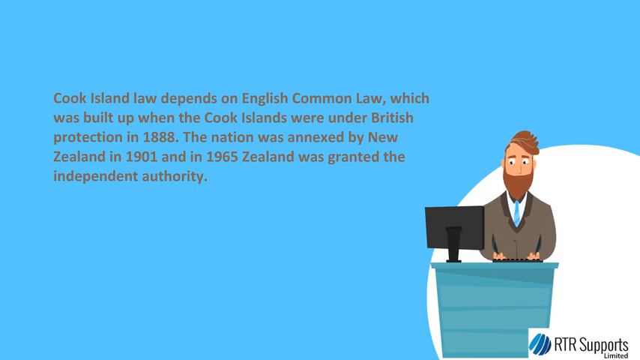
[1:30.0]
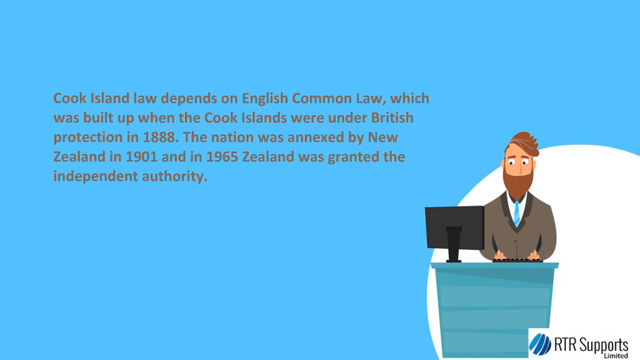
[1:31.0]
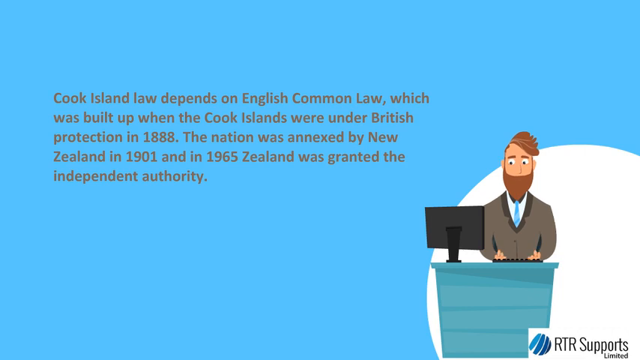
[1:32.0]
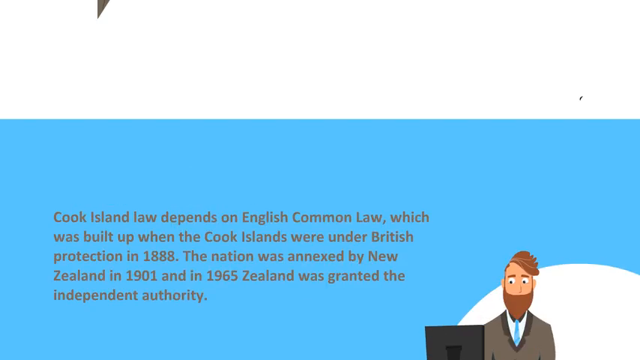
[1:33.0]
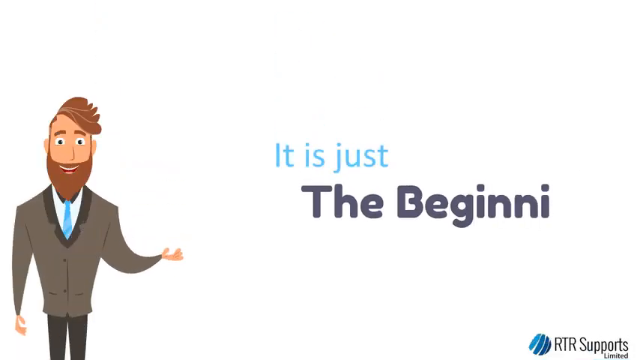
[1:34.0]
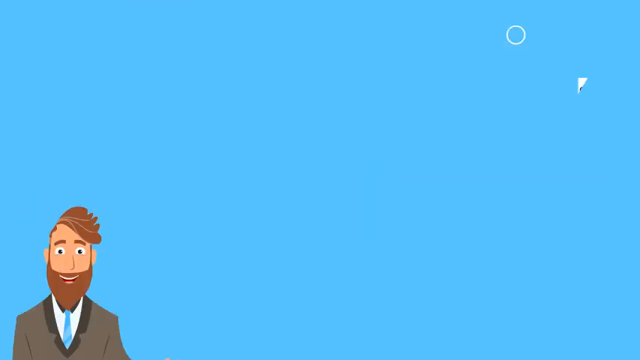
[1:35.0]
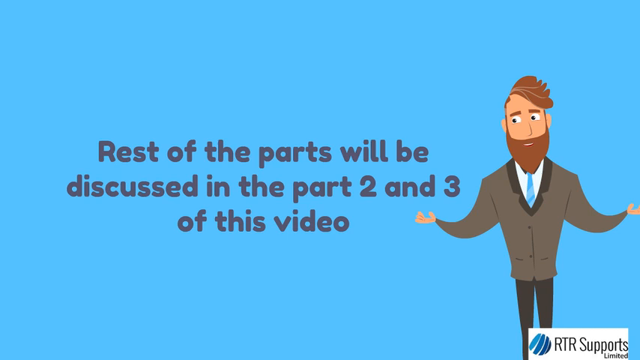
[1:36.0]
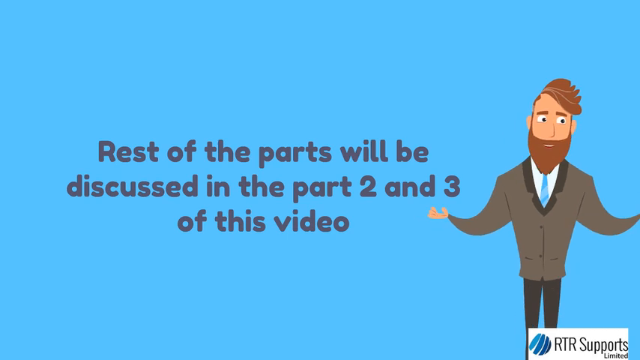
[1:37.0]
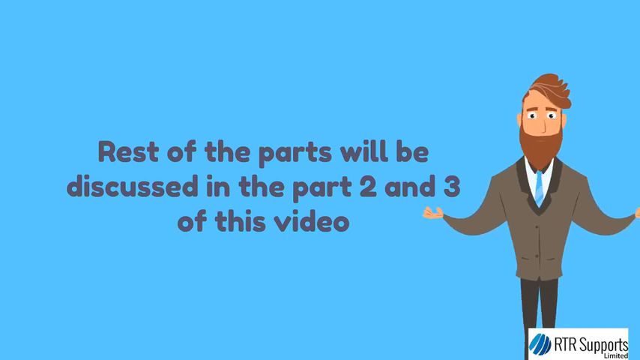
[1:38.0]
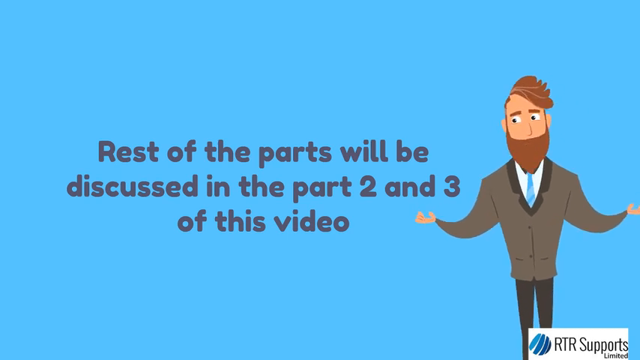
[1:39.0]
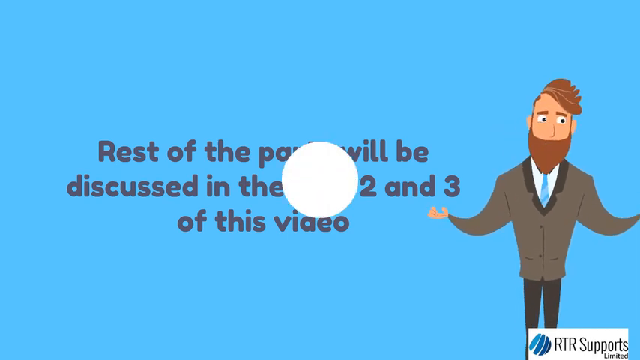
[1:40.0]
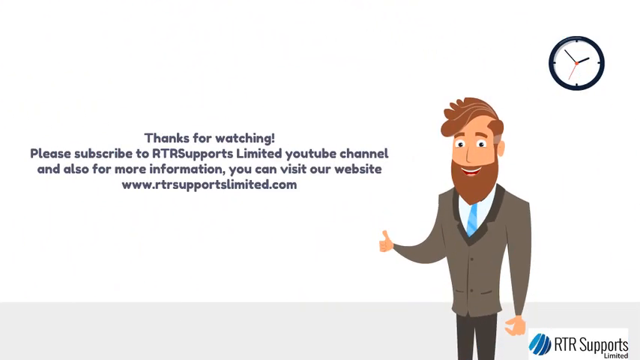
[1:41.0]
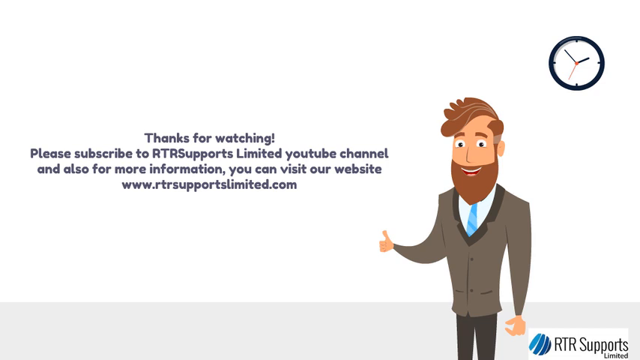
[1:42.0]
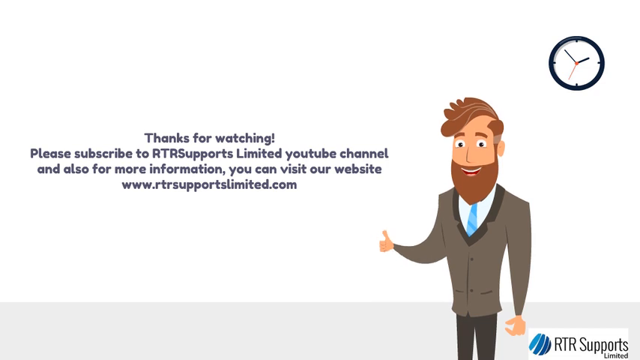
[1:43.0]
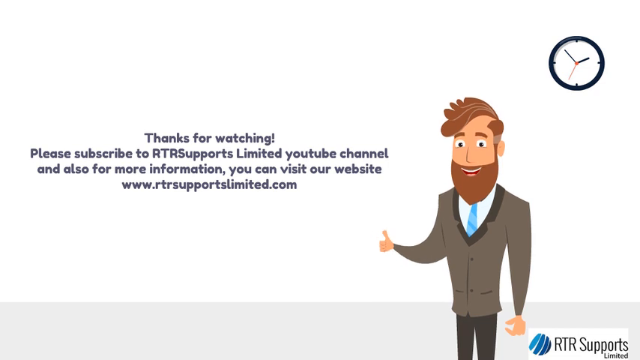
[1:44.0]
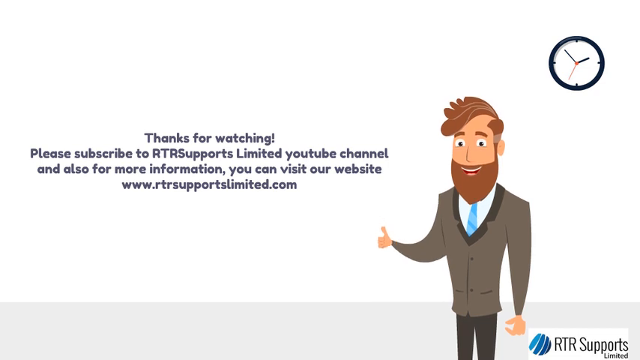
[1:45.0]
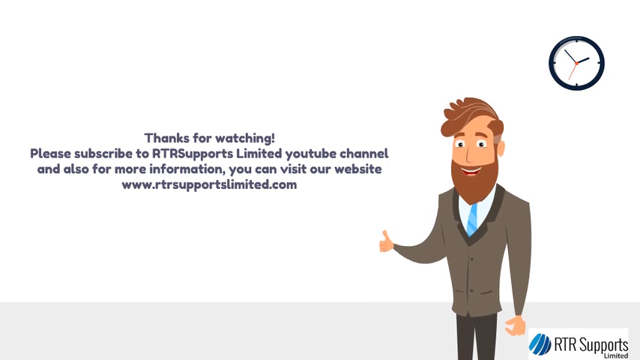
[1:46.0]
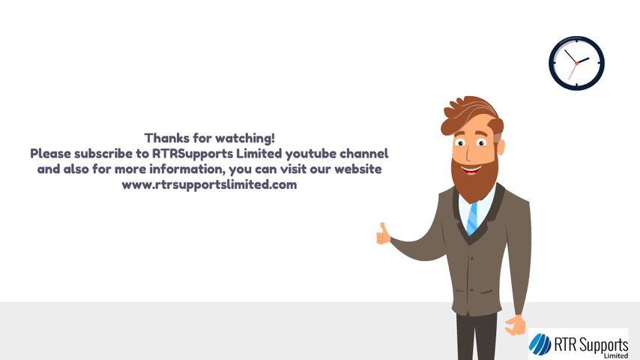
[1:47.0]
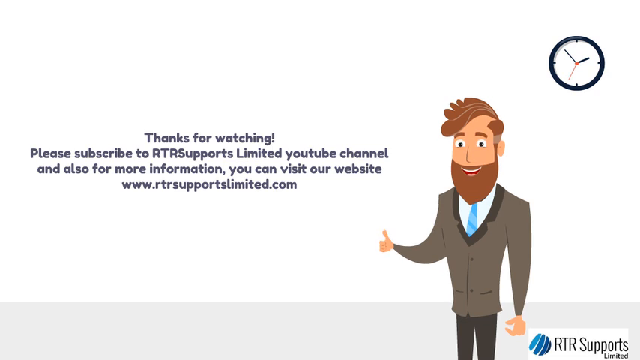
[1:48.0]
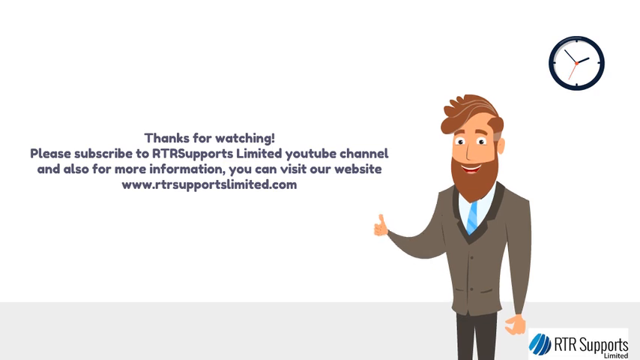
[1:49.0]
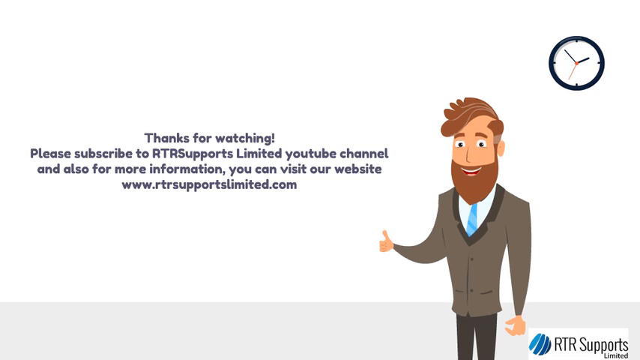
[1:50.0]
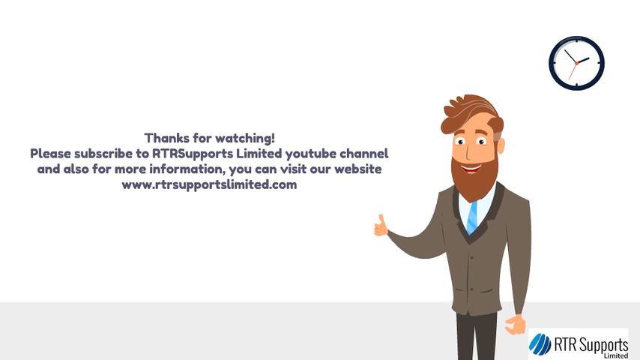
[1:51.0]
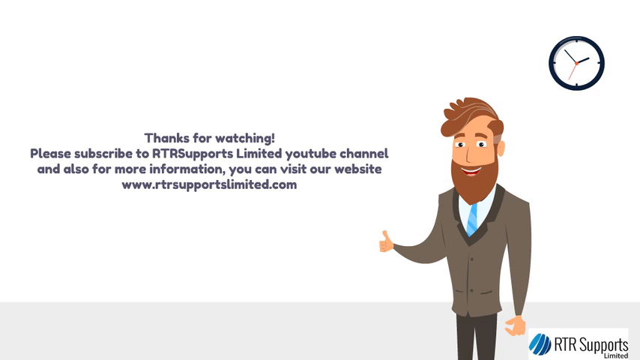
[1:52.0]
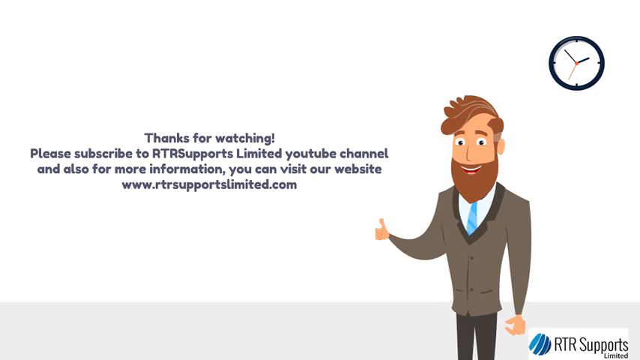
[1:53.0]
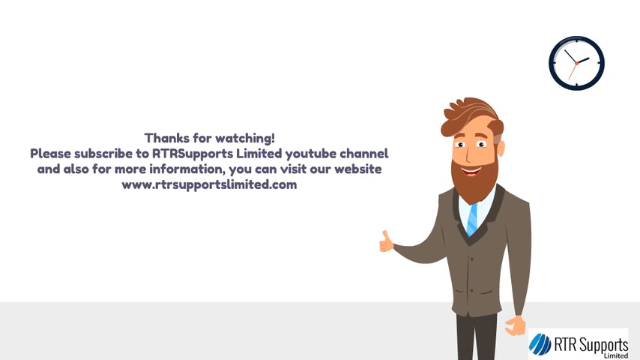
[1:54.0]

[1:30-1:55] The presenter indicates that the rest of the topic will be covered in parts 2 and 3, then concludes with thanks for watching, a request to subscribe to the supports limited YouTube channel, and the website www.r3ssupportslimited.com. A plug is visible on top of Chris Penn's head.